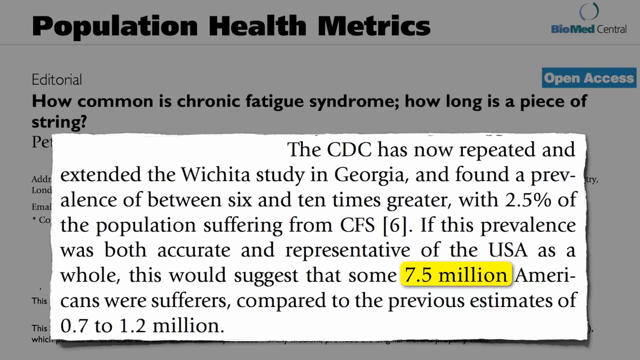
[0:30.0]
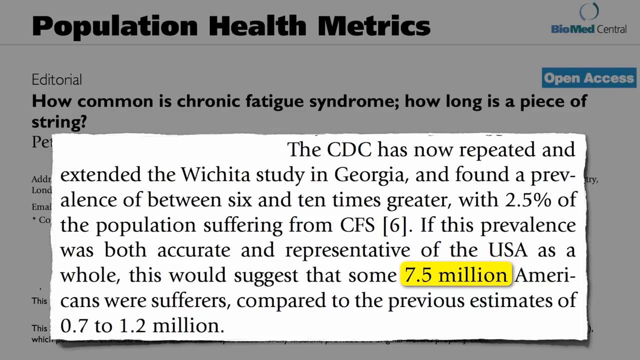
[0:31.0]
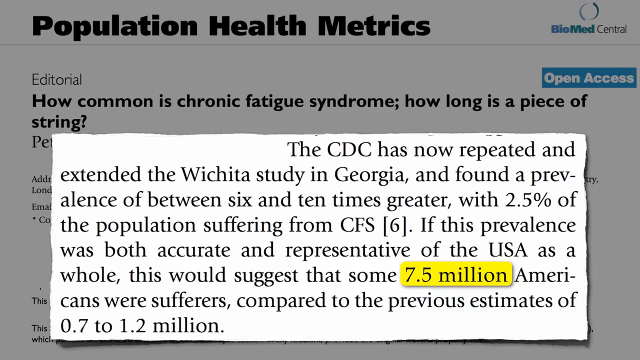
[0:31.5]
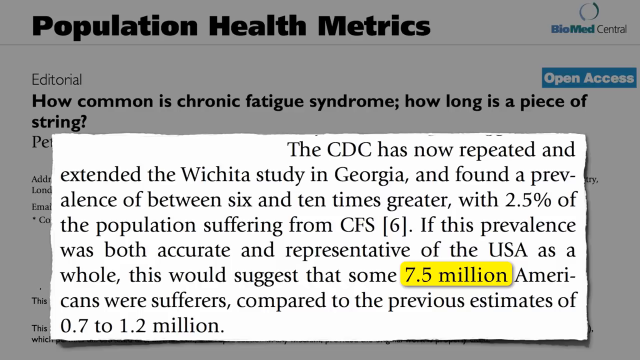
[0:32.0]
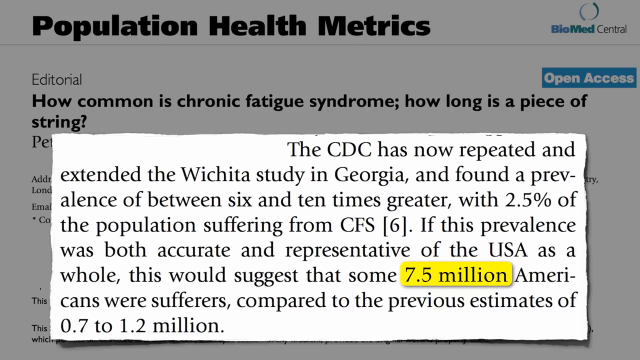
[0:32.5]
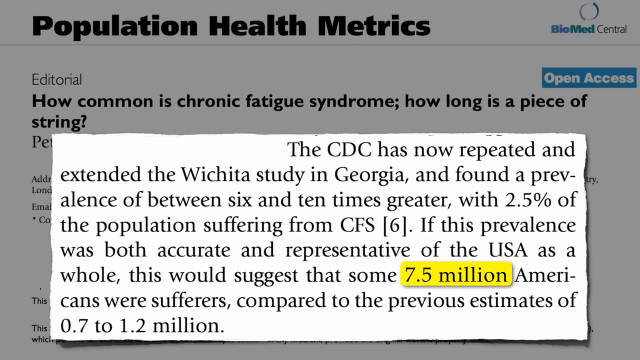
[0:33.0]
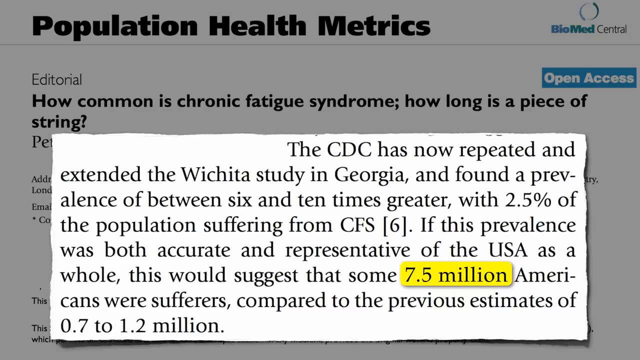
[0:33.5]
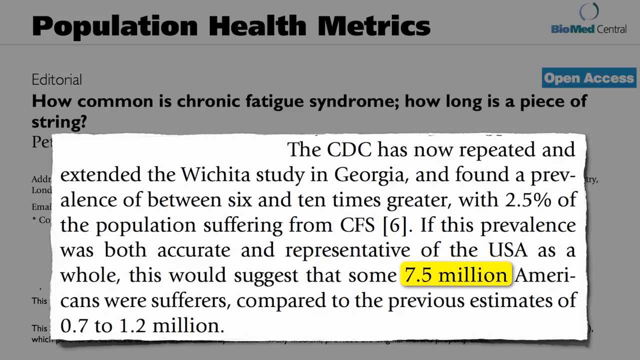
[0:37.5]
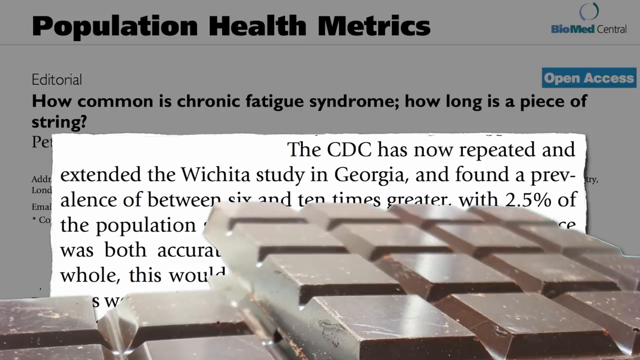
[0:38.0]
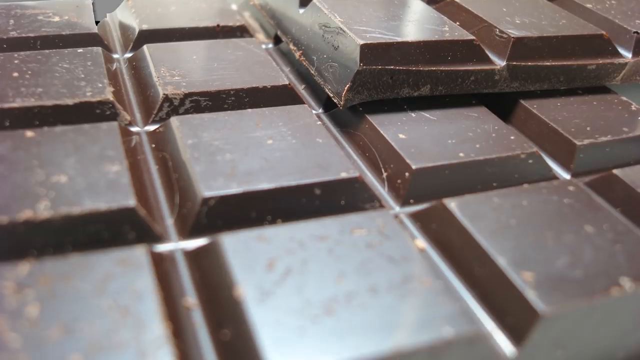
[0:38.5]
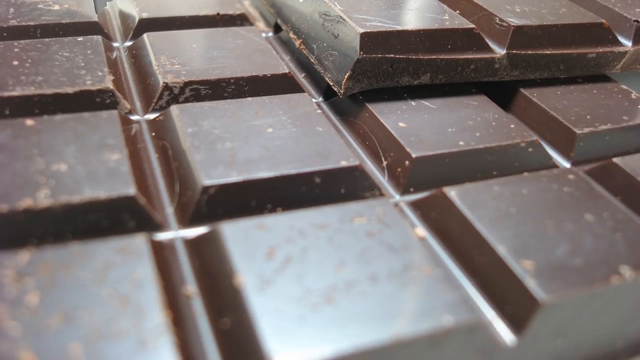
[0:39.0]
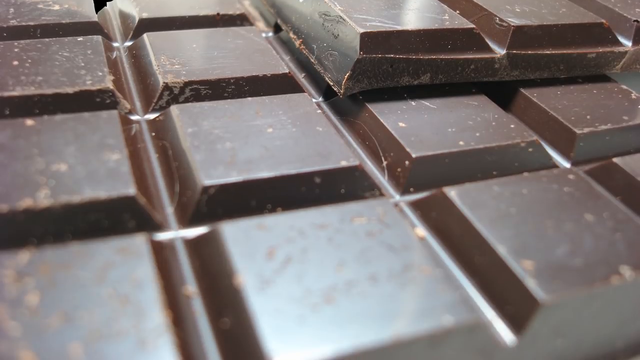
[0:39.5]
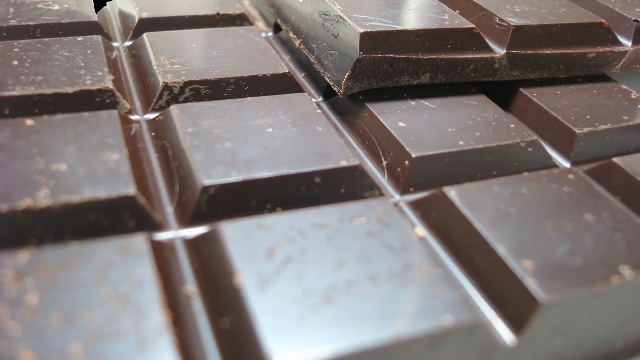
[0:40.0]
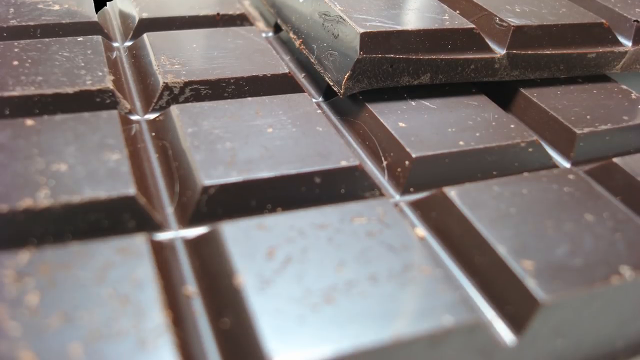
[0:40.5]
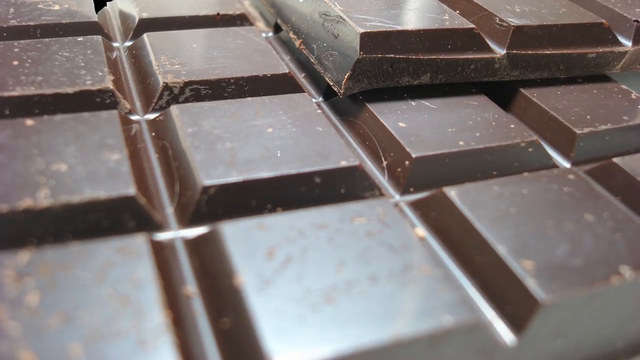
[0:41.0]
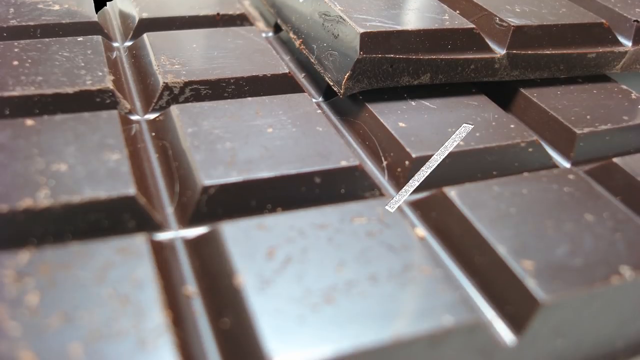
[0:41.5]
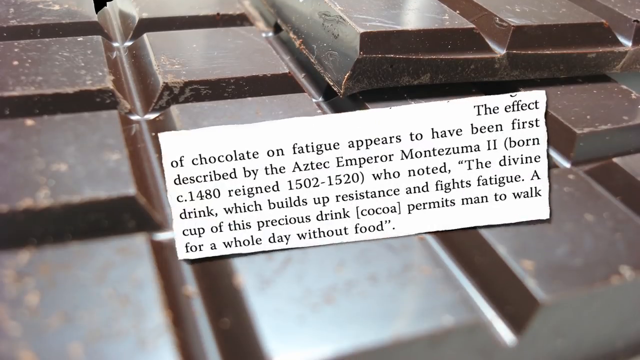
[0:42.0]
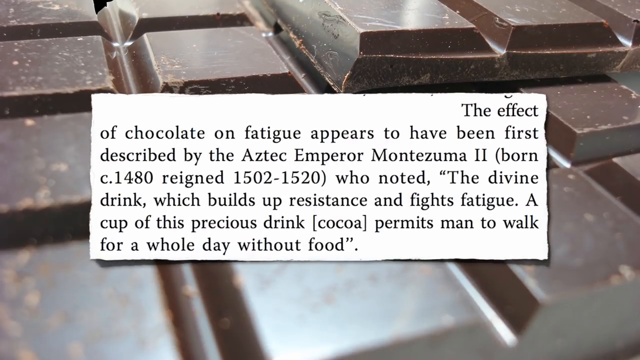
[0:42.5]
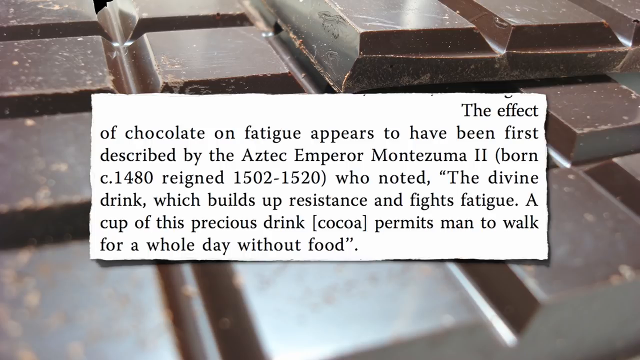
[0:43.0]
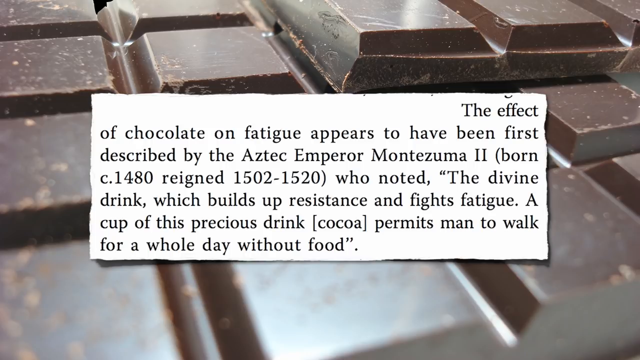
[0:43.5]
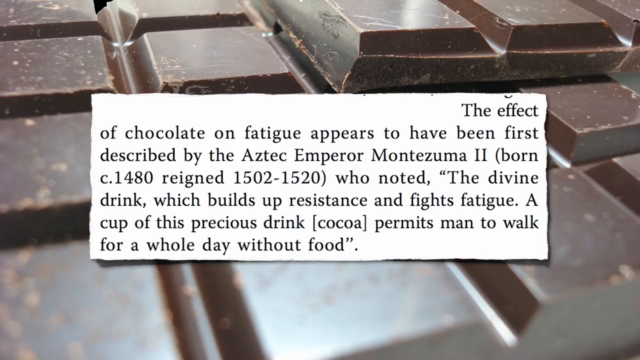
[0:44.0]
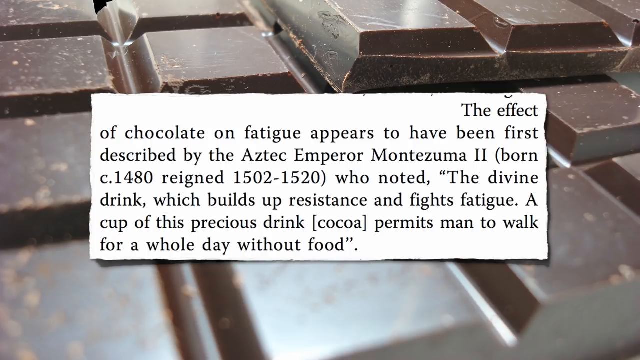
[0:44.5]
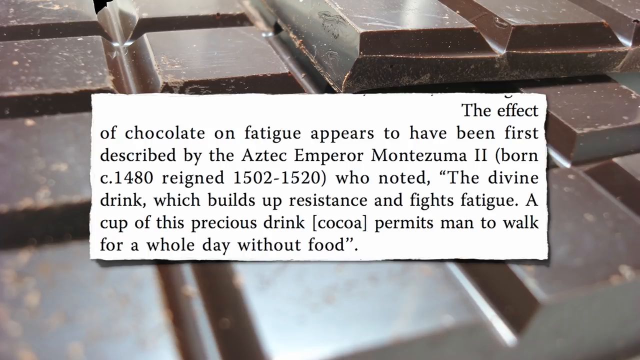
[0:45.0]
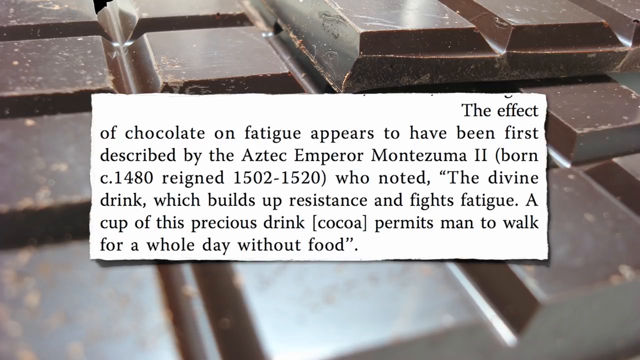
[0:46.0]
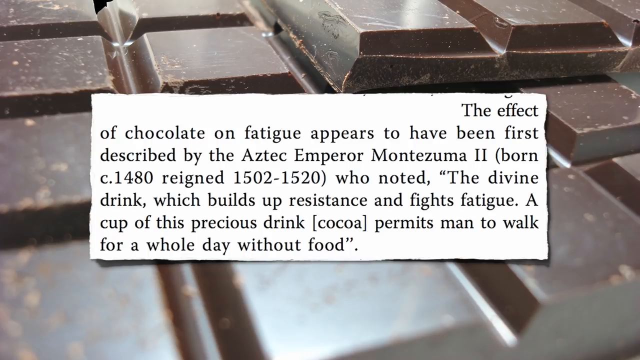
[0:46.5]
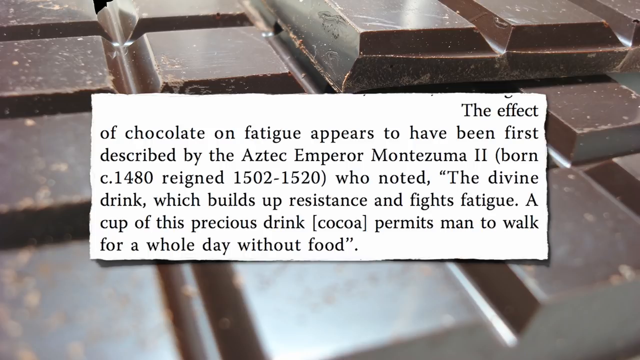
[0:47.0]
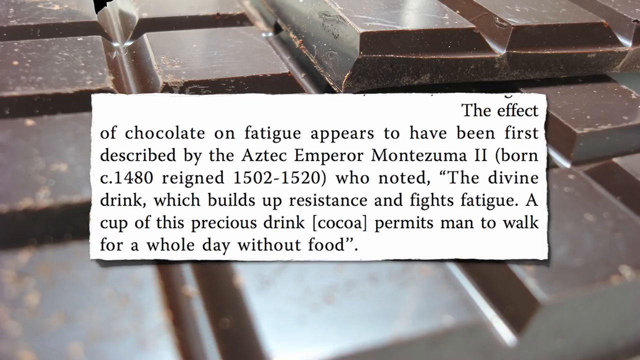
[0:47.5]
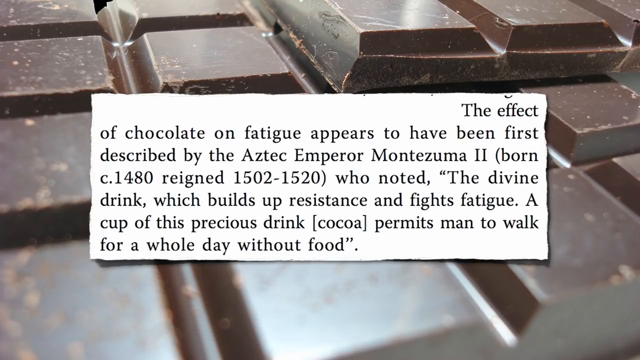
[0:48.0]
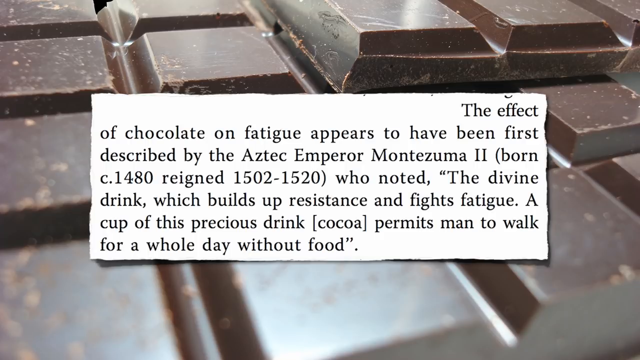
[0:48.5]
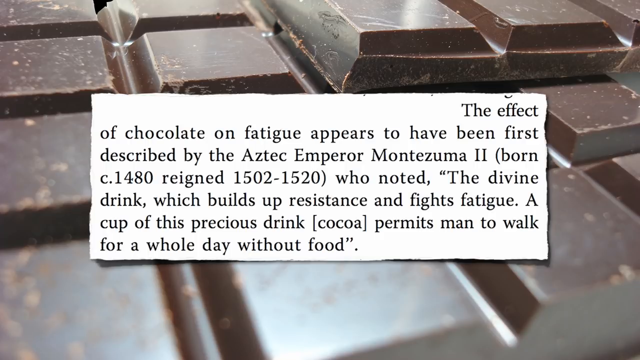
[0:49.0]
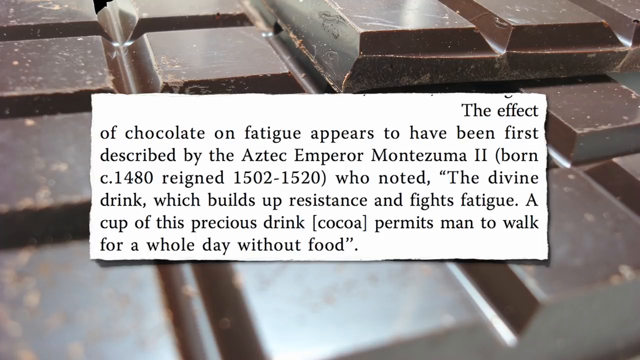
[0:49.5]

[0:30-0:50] In the background, "population health metrics" is written at the top in big bold letters, followed by "editorial" and "how common is chronic fatigue syndrome, how long is a piece of string" at the bottom, aligned left. A clipped paragraph from the same journal is placed over it; it is about a study in Georgia related to chronic fatigue syndrome in the USA, has eight lines in total, and the number "7.5 million" in the third line from the bottom is highlighted. Then a close-up of brown, square chocolate bars slides in and fills the background. With an animated transition like a paper flying, another article clipping is placed on top of it. Its seven-line paragraph reads: "effect of chocolate on fatigue appears to have been first described by the Aztec emperor Montezuma II who noted the divine drink which builds up resistance and fights fatigue. A cup of this precious drink permits man to walk for a whole day without food".